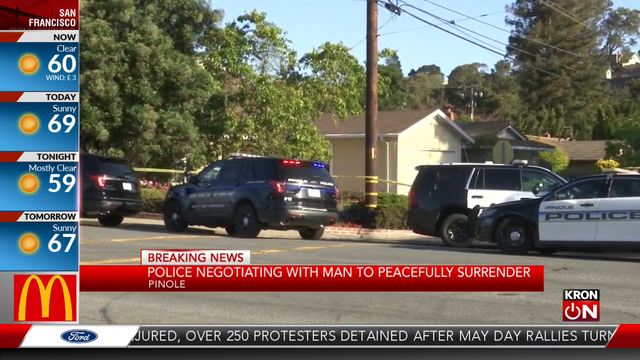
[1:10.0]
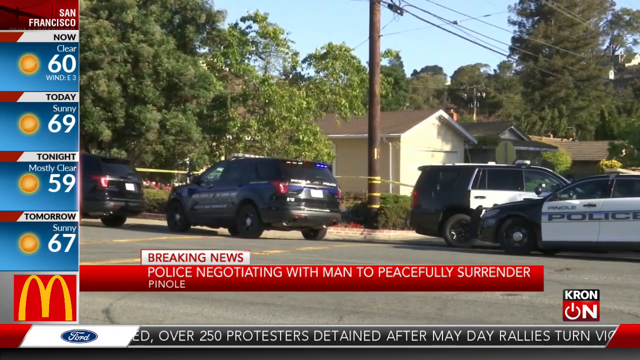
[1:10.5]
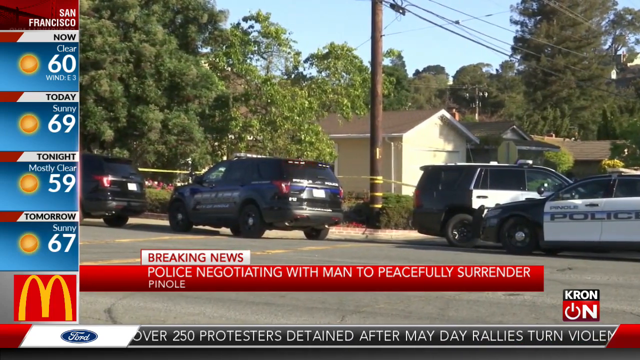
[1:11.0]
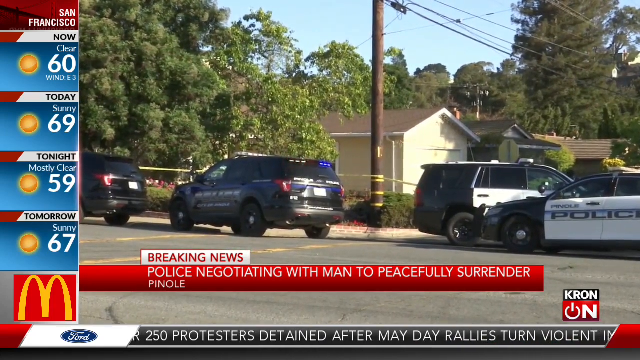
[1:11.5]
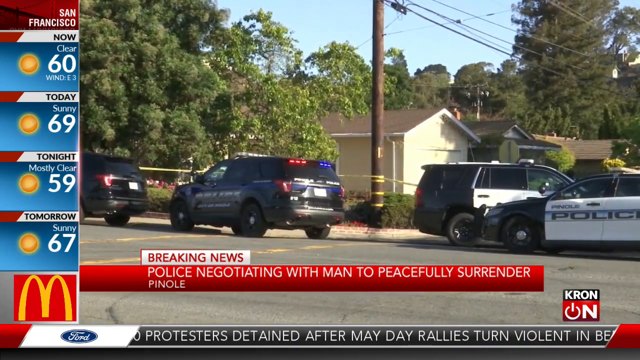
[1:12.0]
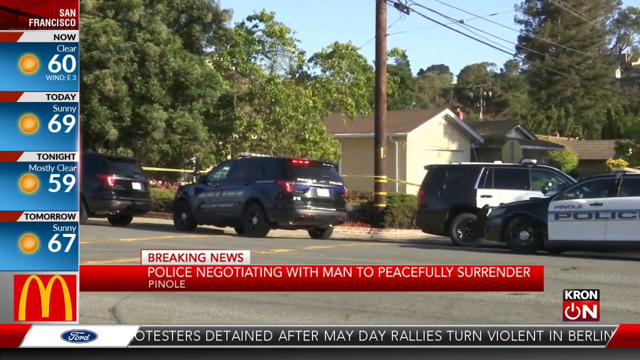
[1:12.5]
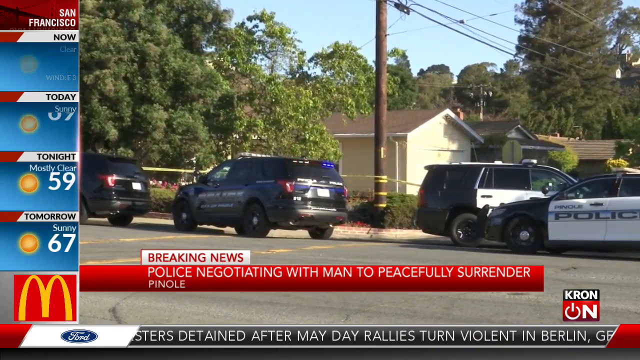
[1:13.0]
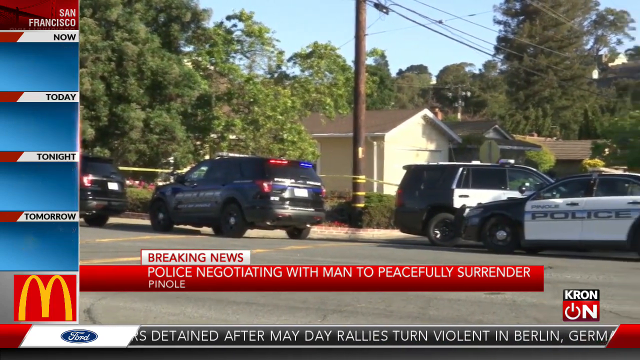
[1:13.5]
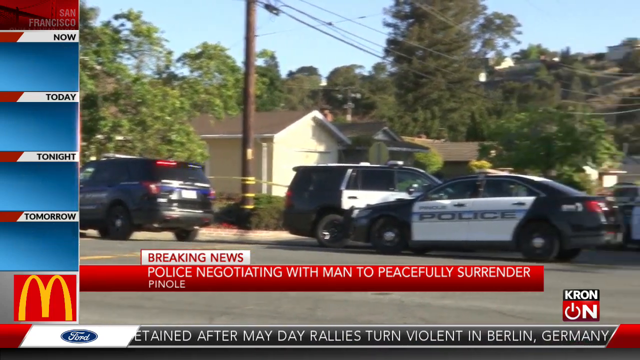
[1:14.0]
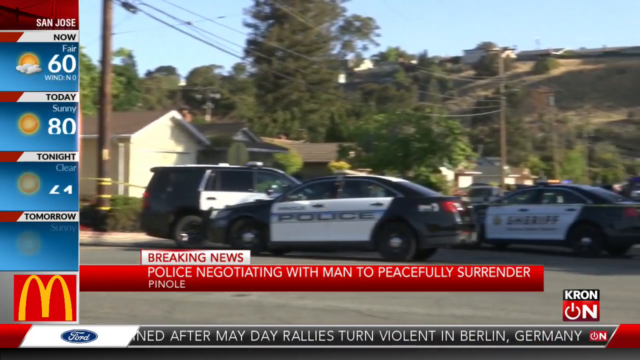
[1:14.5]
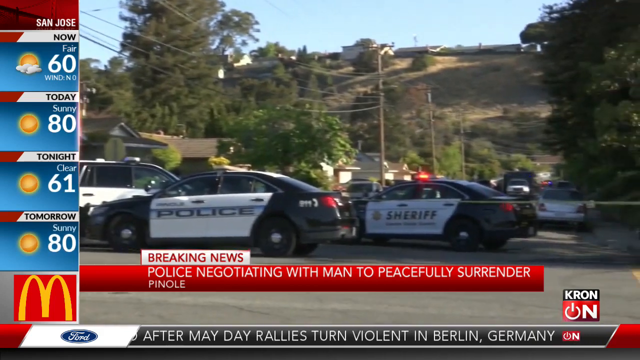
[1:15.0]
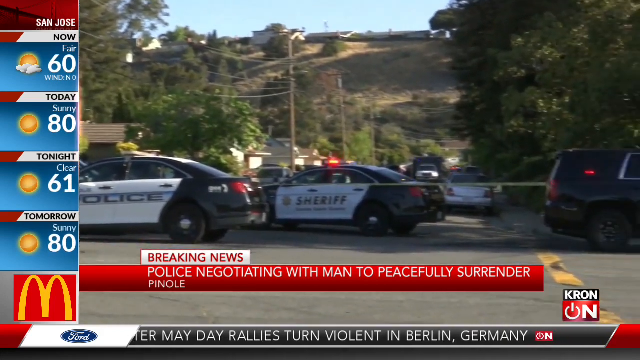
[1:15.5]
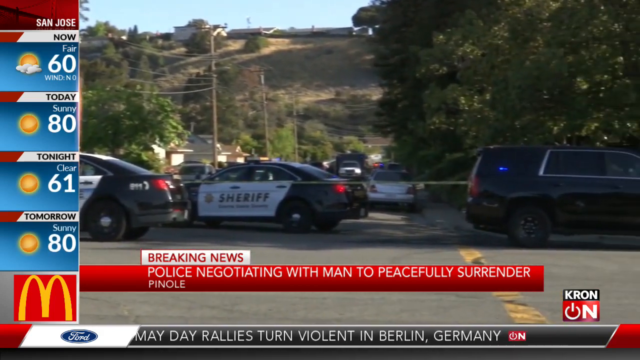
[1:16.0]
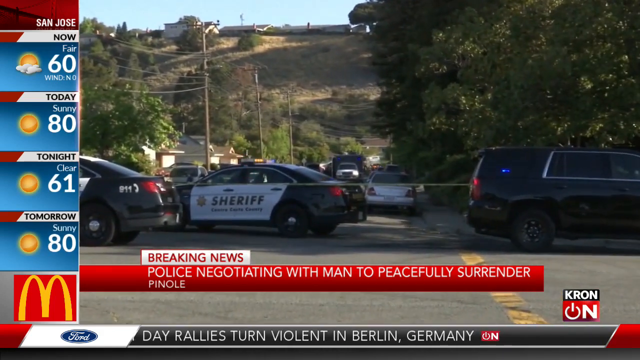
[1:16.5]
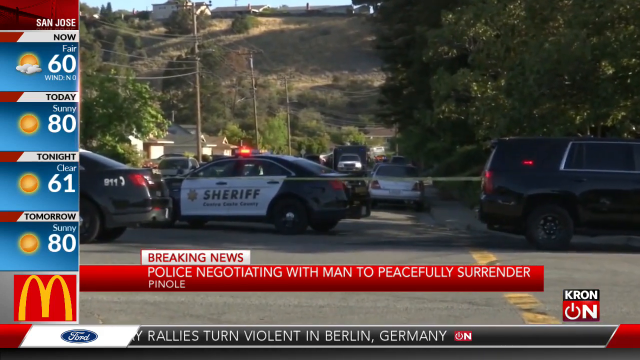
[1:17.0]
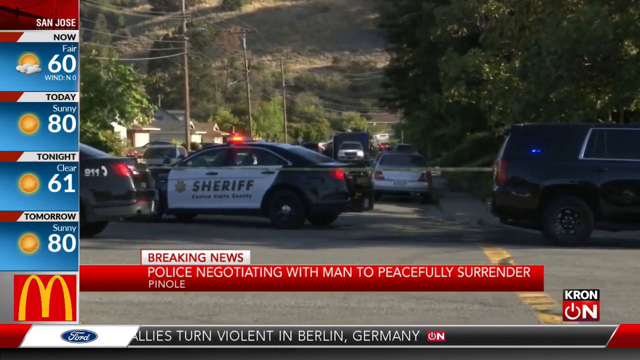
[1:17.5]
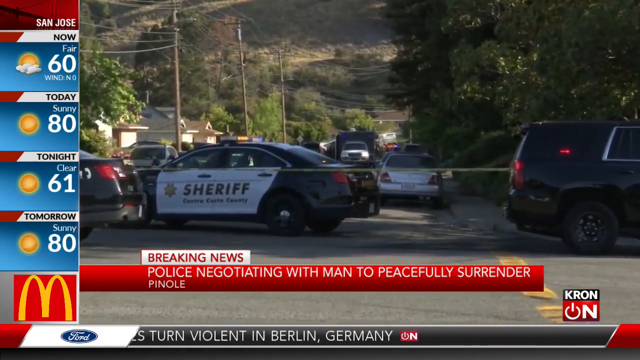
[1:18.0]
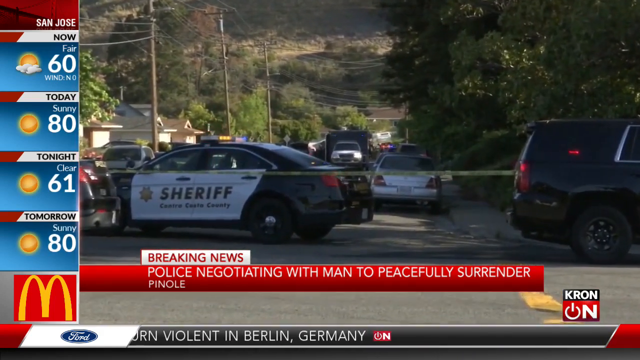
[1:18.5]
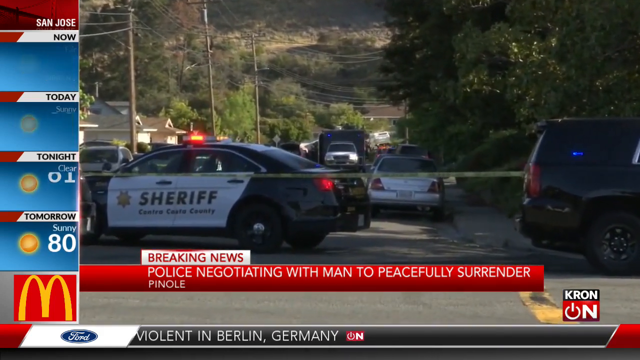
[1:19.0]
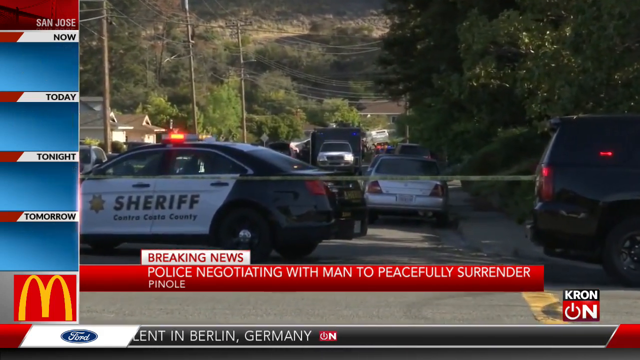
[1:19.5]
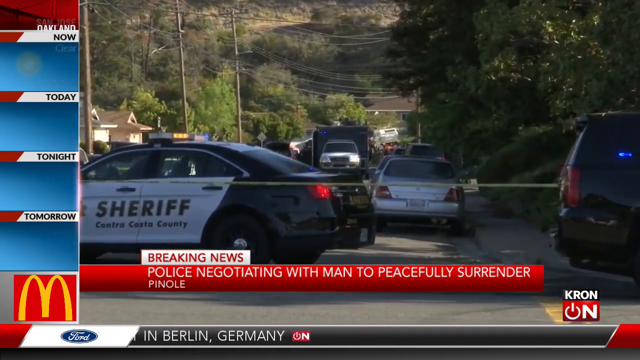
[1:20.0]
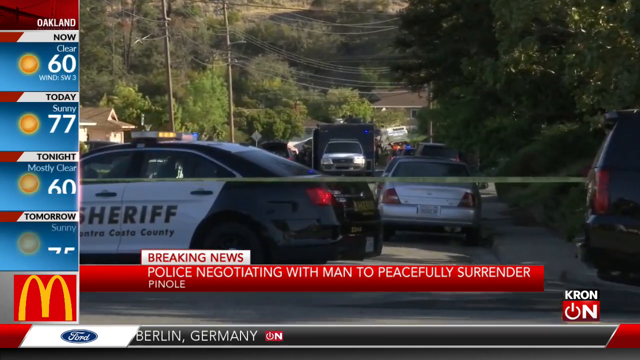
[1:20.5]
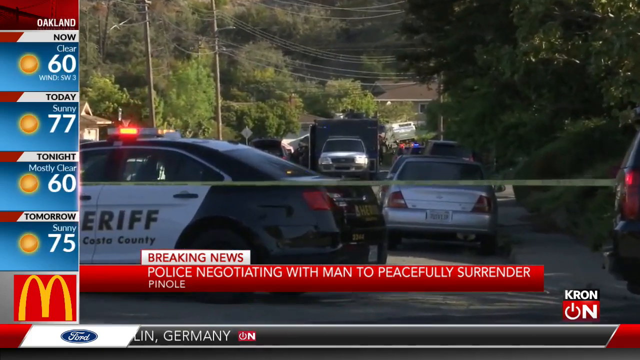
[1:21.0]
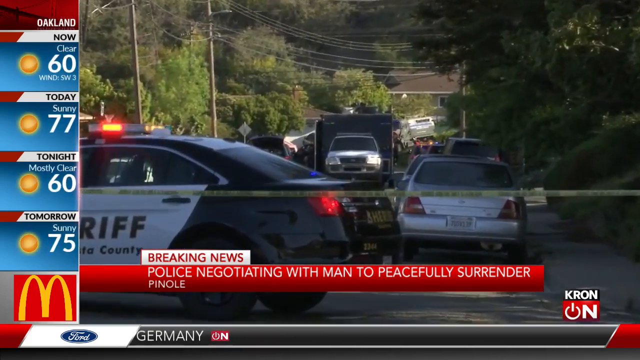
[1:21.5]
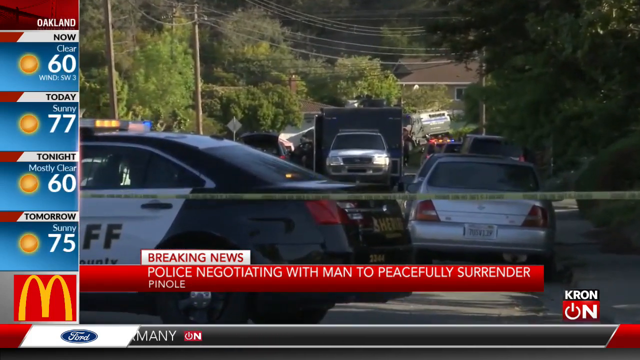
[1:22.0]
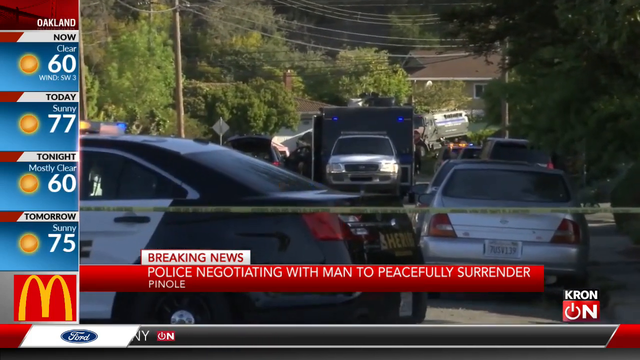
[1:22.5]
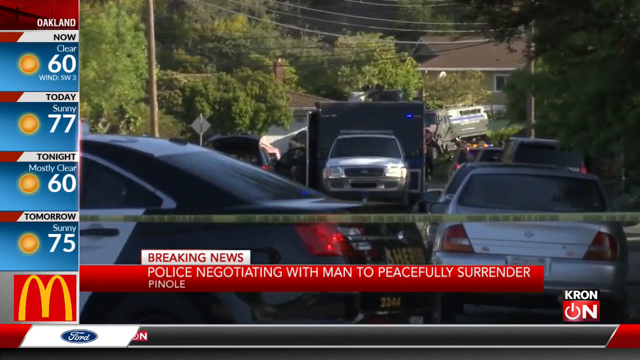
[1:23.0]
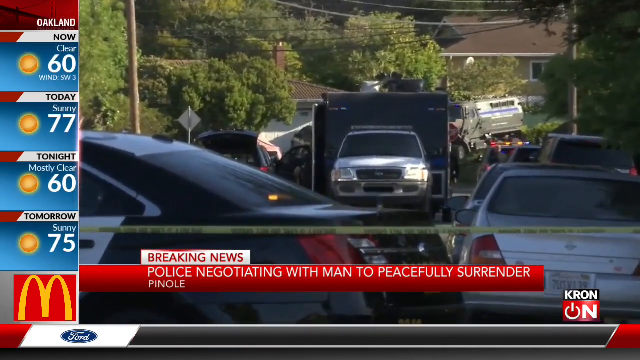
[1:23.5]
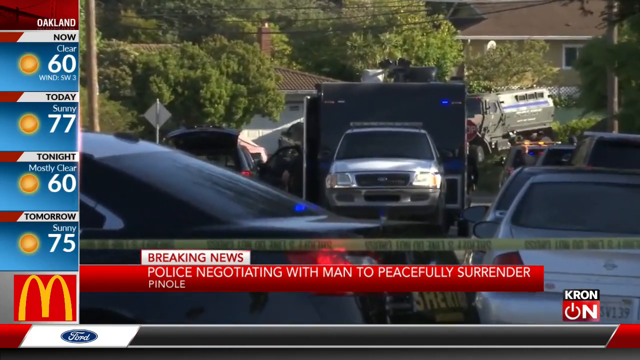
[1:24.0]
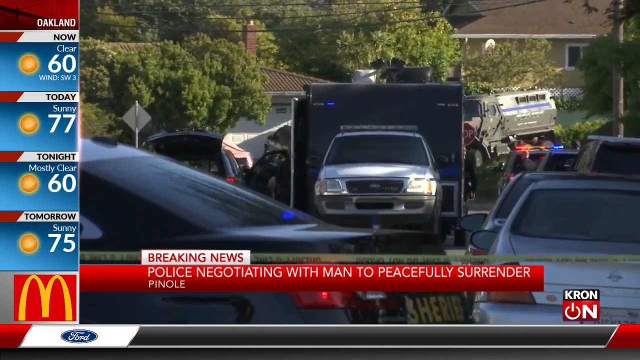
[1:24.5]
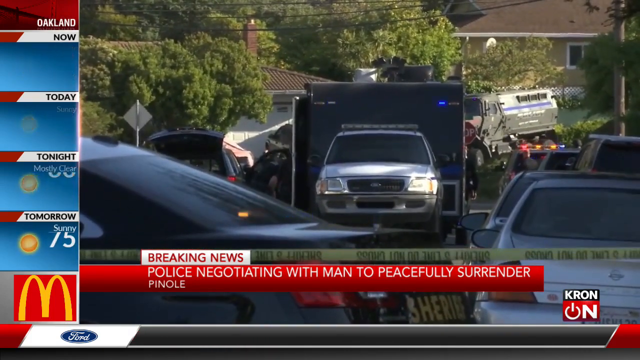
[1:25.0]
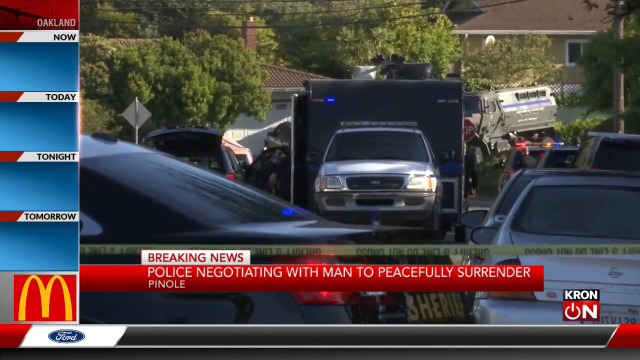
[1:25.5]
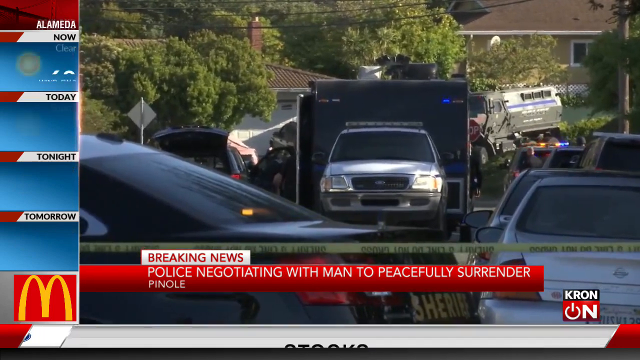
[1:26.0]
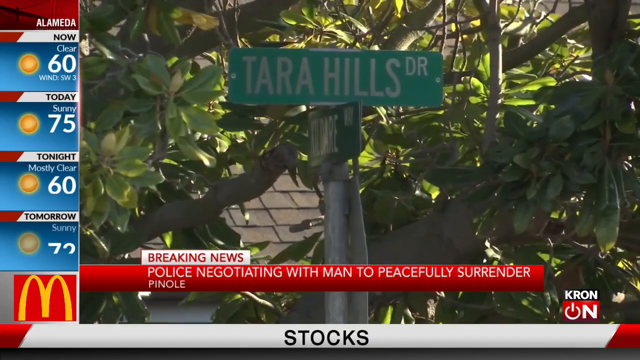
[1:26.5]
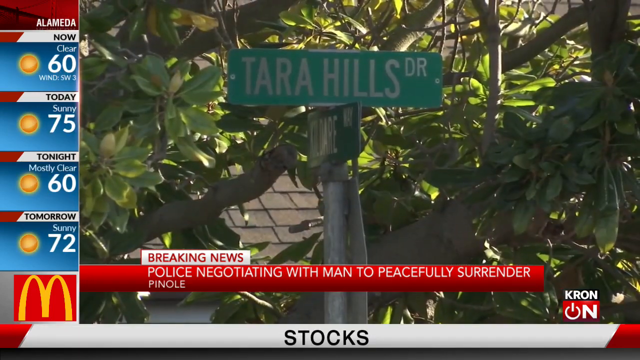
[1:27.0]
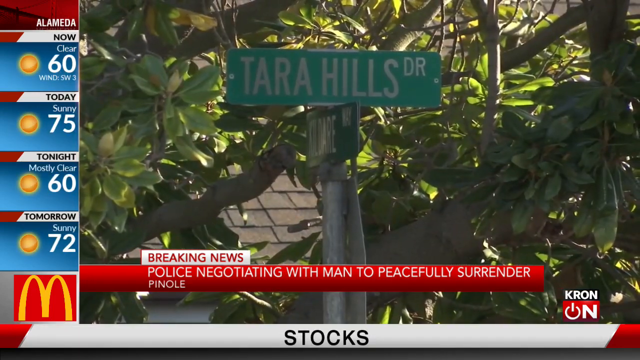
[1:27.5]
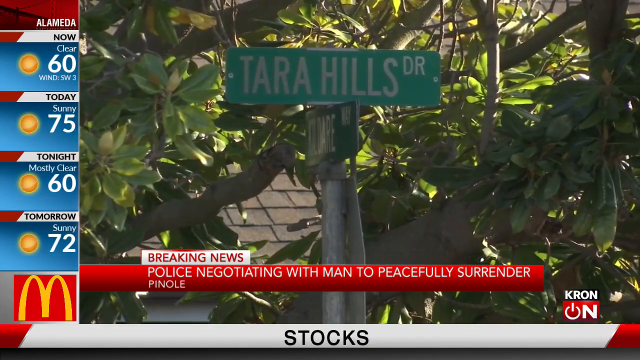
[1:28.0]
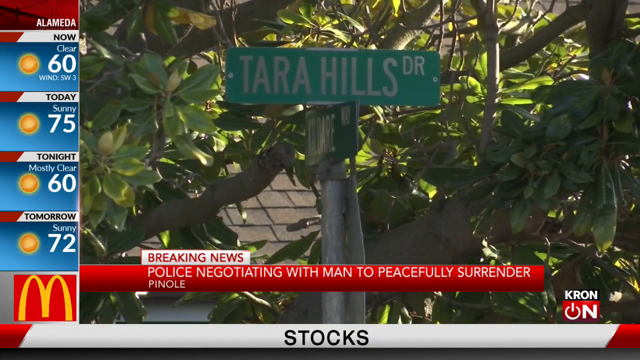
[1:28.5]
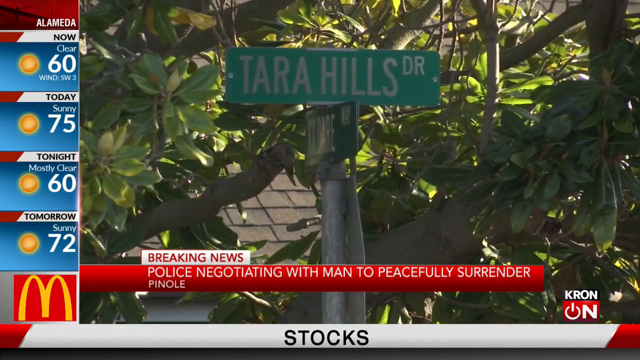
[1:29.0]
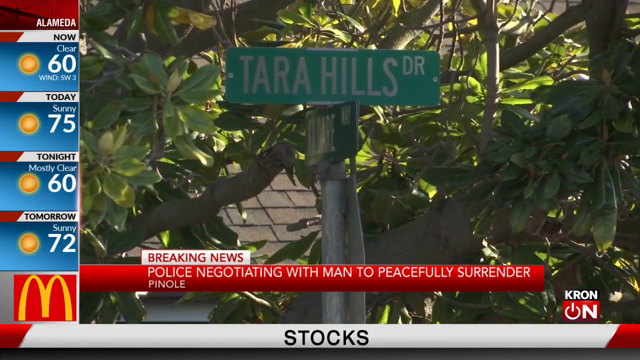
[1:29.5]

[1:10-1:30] The same image of police cars, all parked in front of some houses, continues. The camera travels from left to right, showing that there are a lot of police cars on the street, then slowly zooms in on the street, maybe trying to show something, but only shows another car. A shot then shows that this is in Terra Hills, TR. A red bar at the bottom of the screen identifies the situation, "police negotiating with man to peacefully surrender" in Pinole, with a small white bar on top of it in red letters reading "breaking news". The column on the left shows the weather, now in Alameda, with a McDonald's sign at the bottom. In the bottom right there is a small window identifying the TV station as Kron.